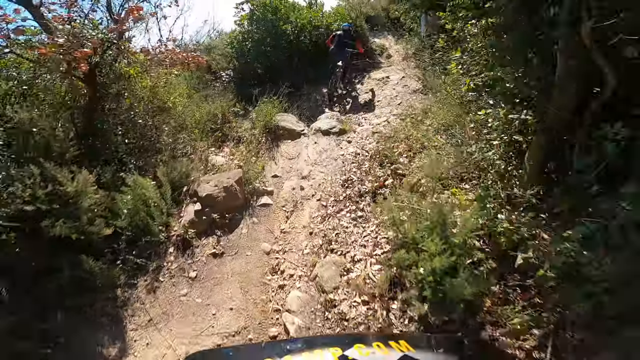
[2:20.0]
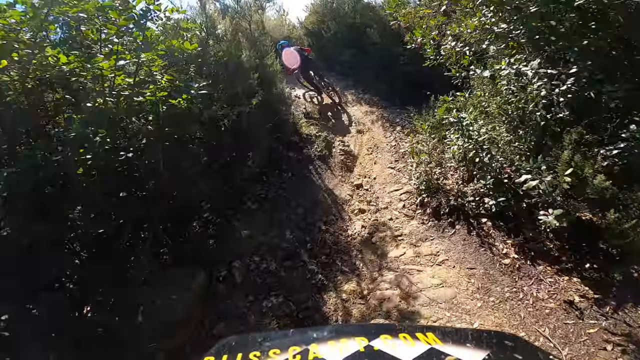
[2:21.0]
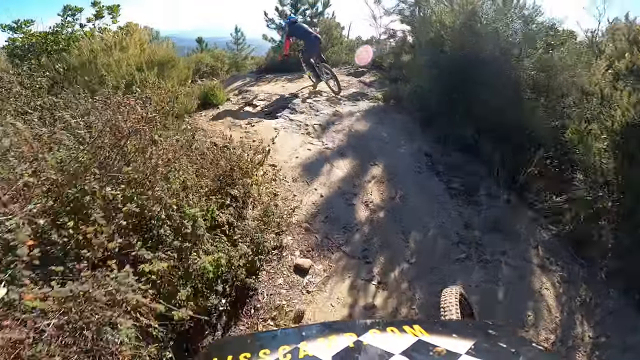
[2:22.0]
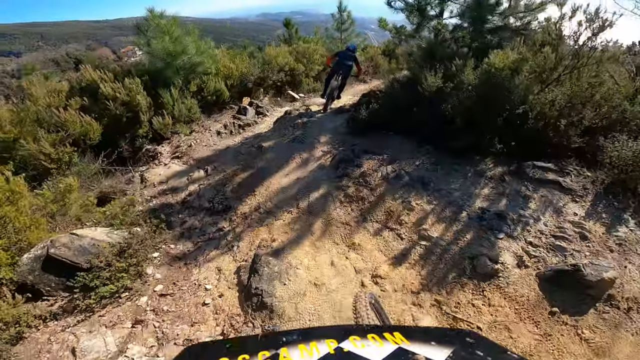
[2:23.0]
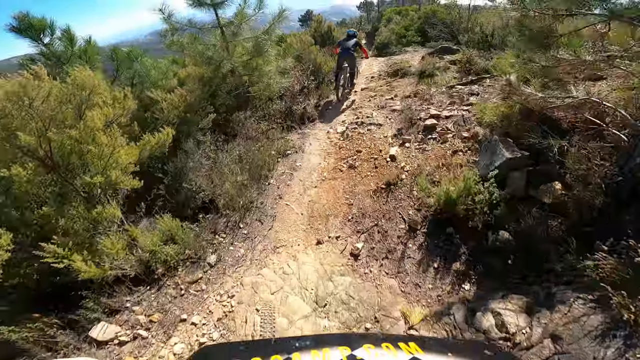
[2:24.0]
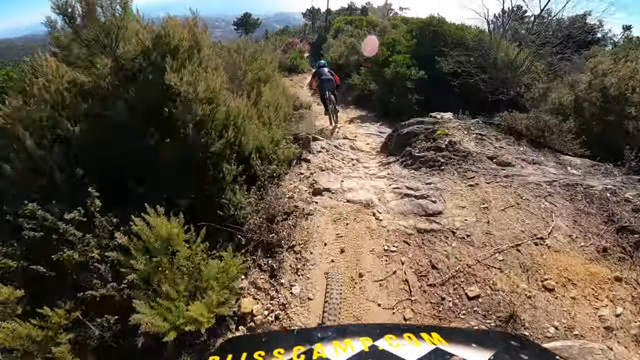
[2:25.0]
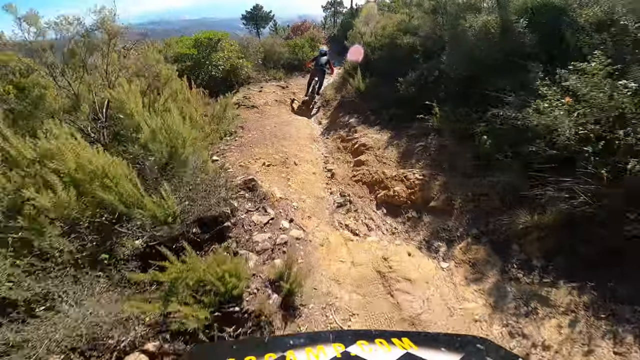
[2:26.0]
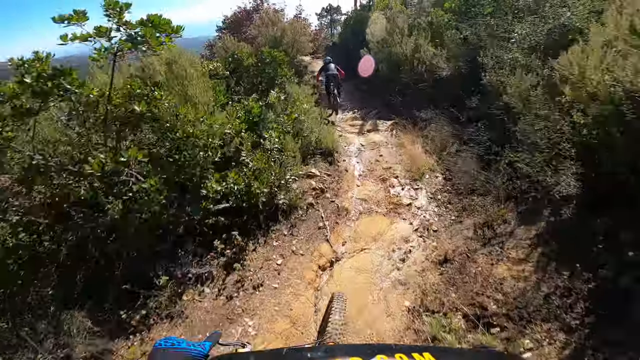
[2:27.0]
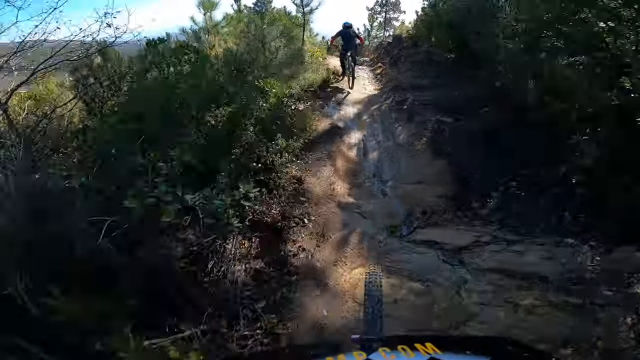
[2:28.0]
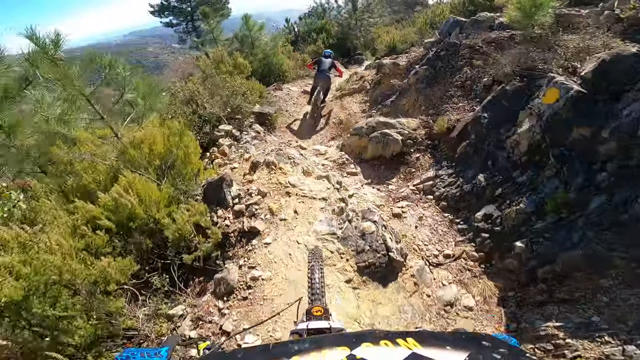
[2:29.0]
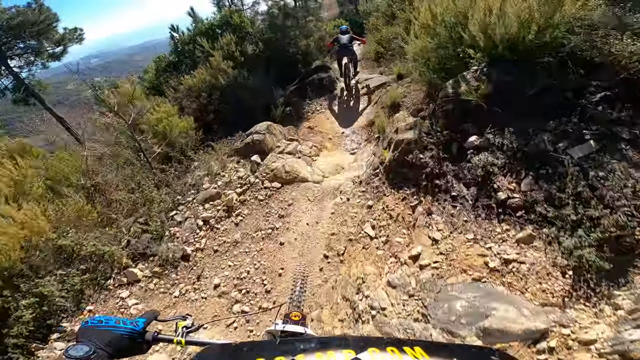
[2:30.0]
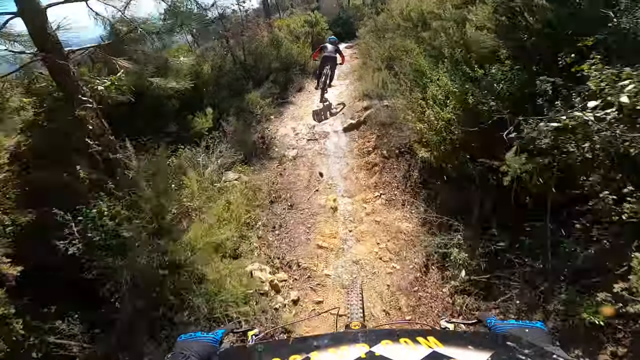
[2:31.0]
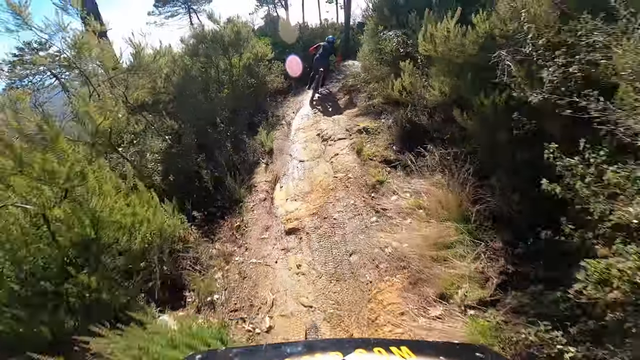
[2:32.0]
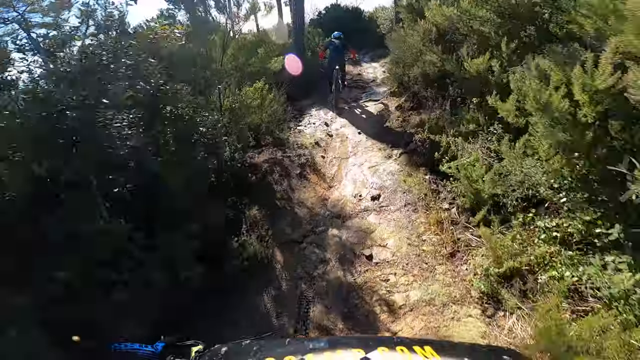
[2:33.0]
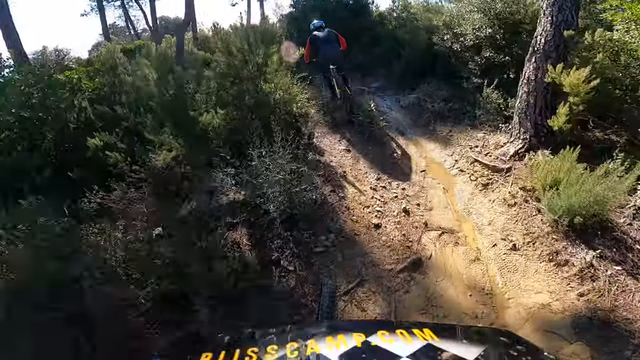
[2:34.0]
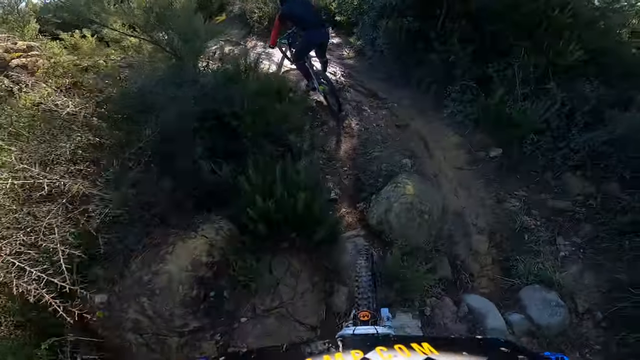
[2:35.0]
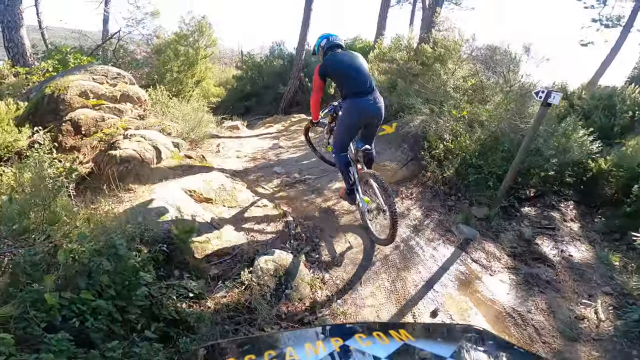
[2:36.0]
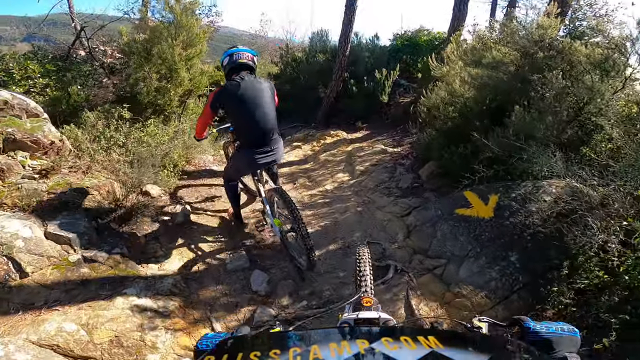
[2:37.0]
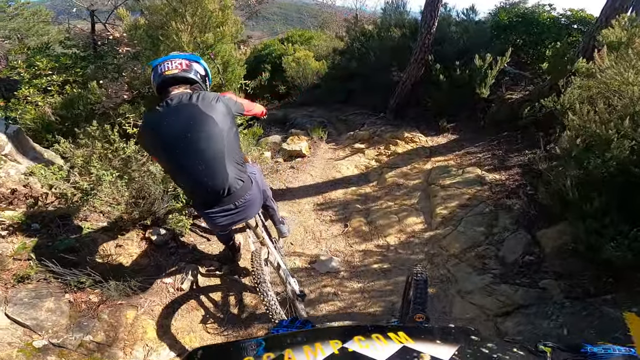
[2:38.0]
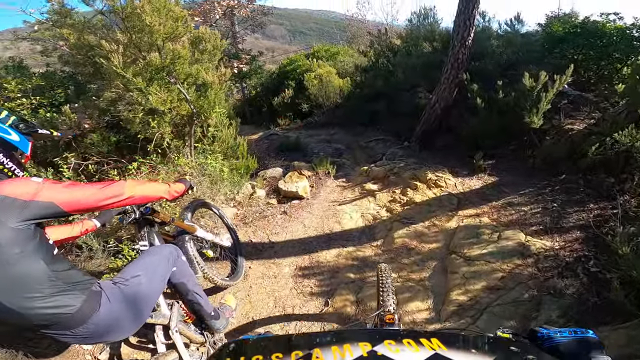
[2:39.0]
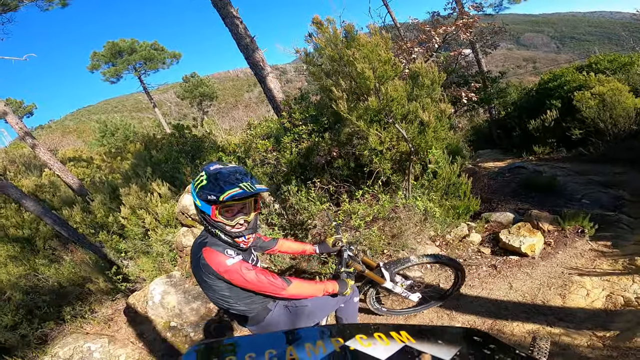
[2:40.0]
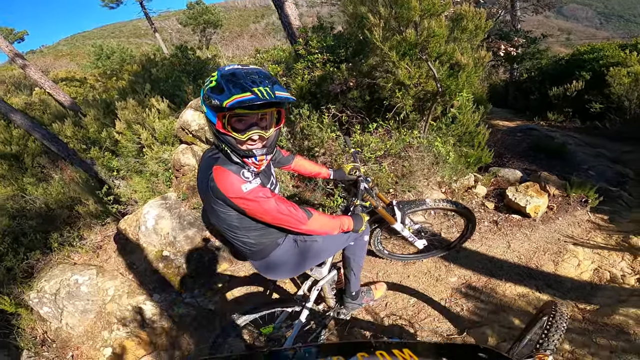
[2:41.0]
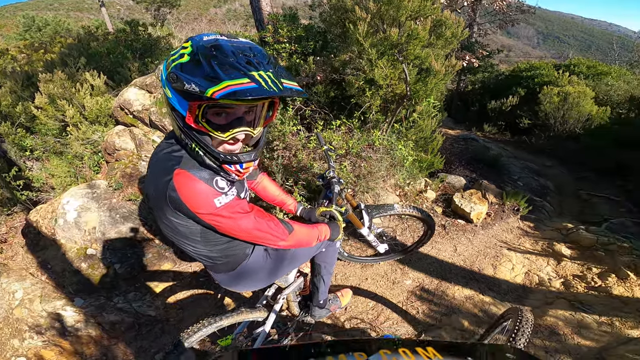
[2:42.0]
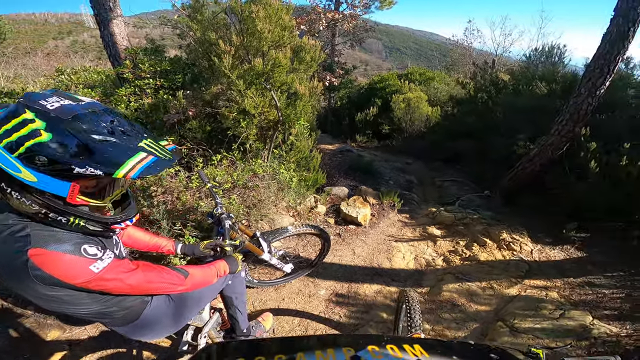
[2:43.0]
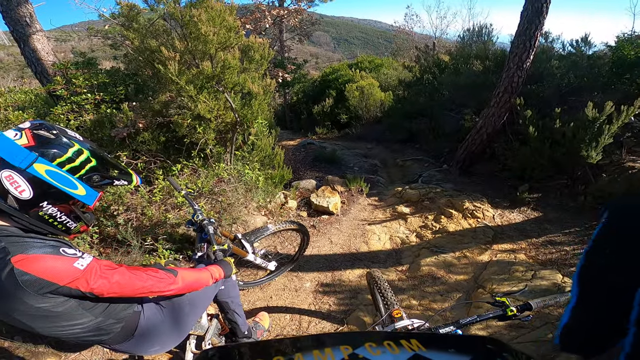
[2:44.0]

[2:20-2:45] The camera is still riding behind him, about 10 yards back. The road takes him to the left and back toward the right. He goes over a slight bump in the hill, drops down slightly and takes another little jump. At moments the front tire of the camera's bike is barely visible at the lower center of the screen. He slows down slightly and comes to a stop. The camera rides up beside him and almost stops, to his right, slightly behind him and at a slightly elevated level. He is facing forward but turns his head to look directly at the camera. His hands are kind of on his knees and he is looking down. A Monster logo is on his helmet.